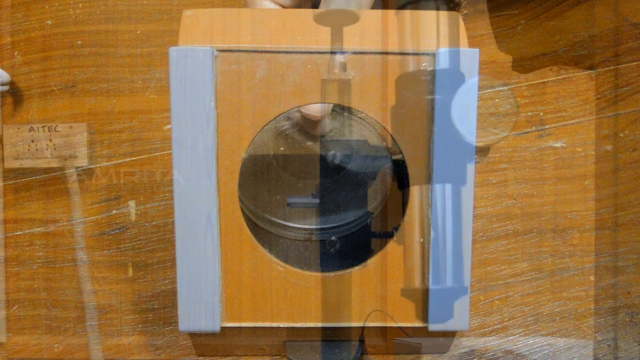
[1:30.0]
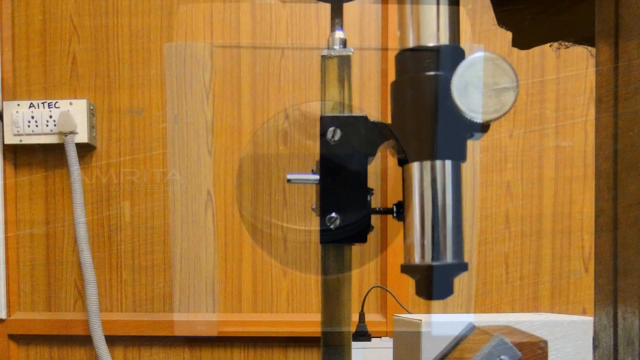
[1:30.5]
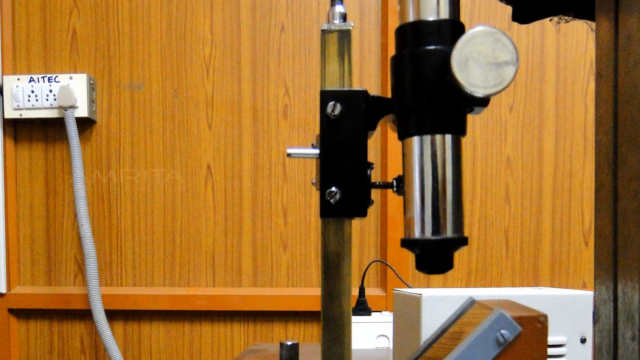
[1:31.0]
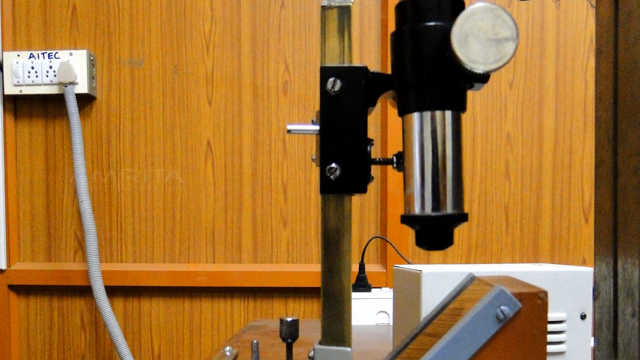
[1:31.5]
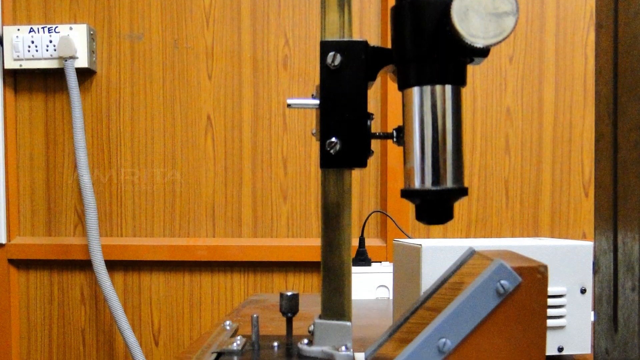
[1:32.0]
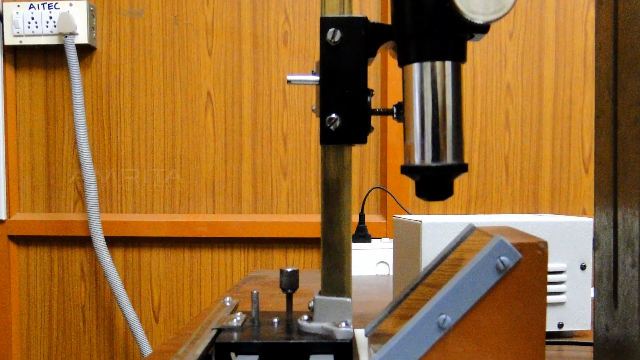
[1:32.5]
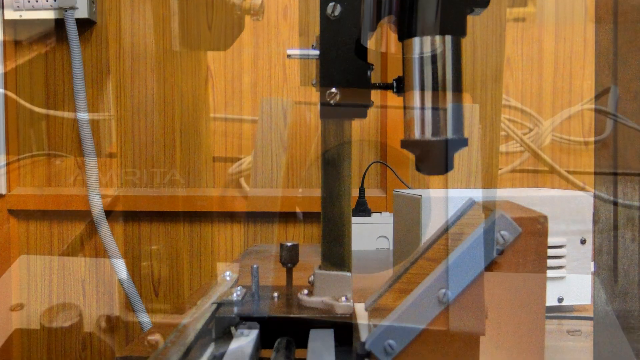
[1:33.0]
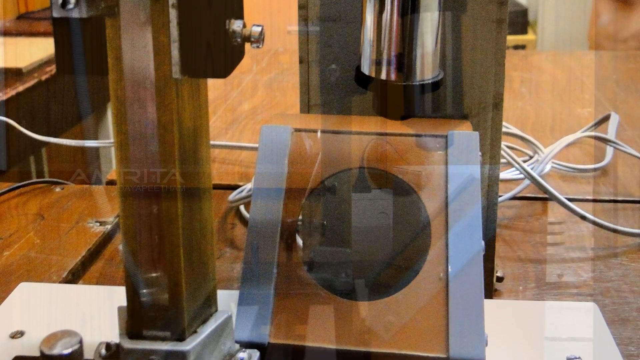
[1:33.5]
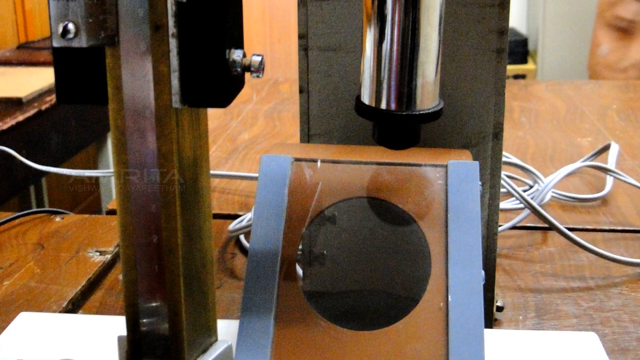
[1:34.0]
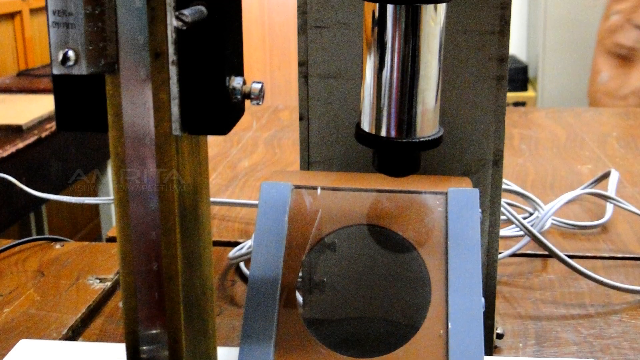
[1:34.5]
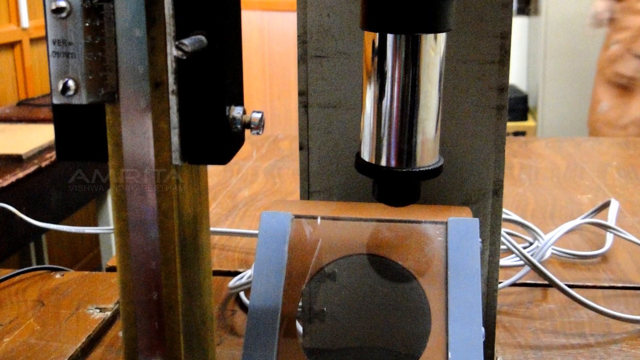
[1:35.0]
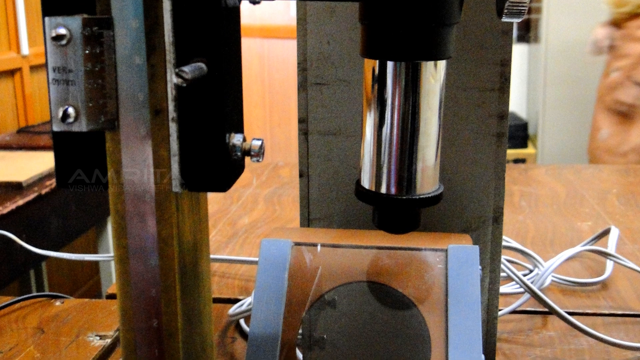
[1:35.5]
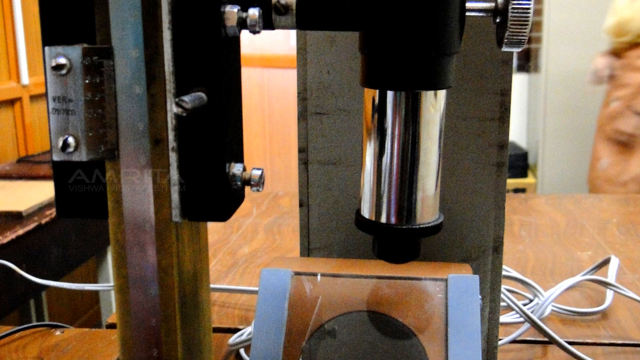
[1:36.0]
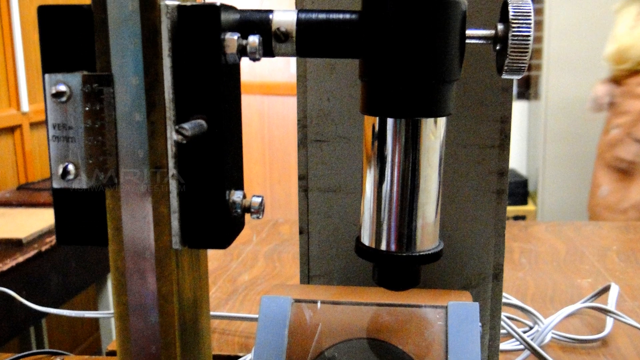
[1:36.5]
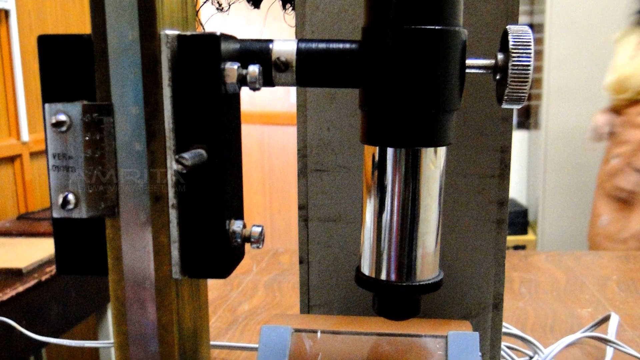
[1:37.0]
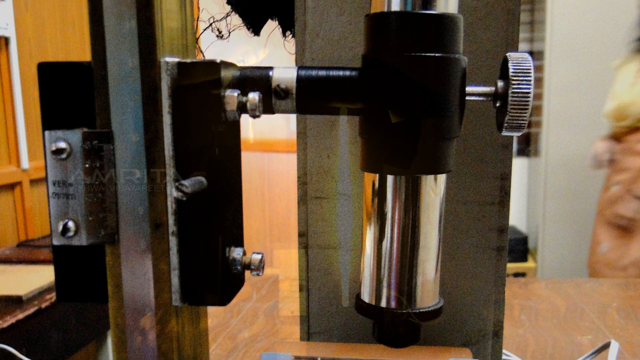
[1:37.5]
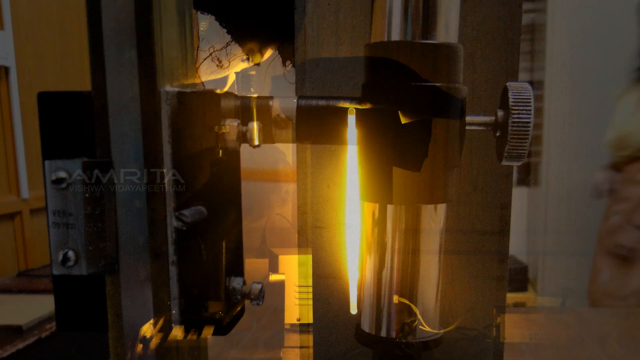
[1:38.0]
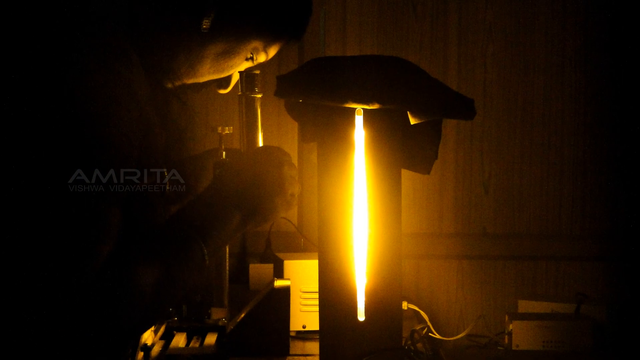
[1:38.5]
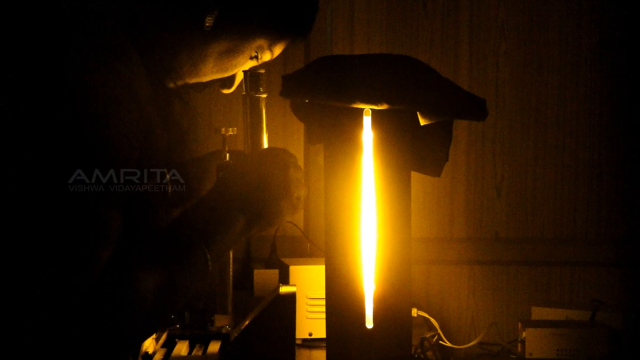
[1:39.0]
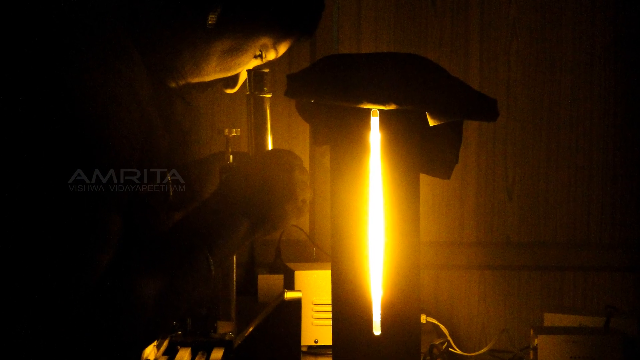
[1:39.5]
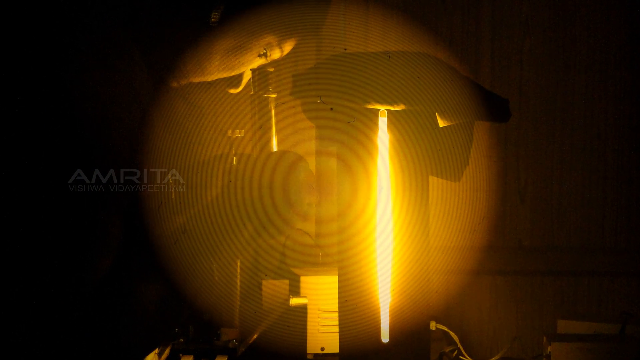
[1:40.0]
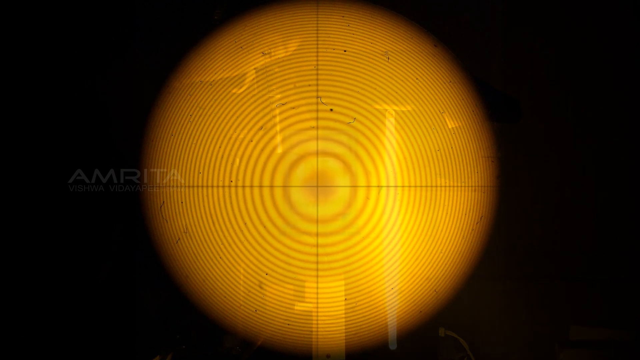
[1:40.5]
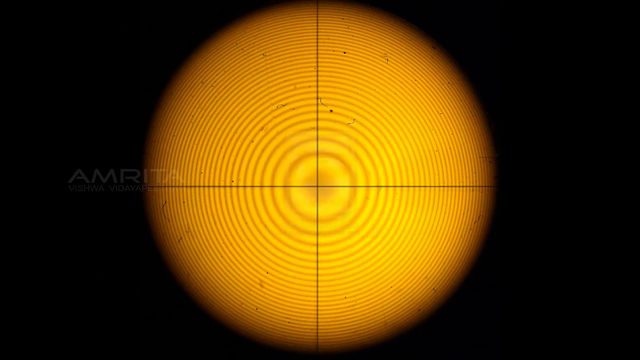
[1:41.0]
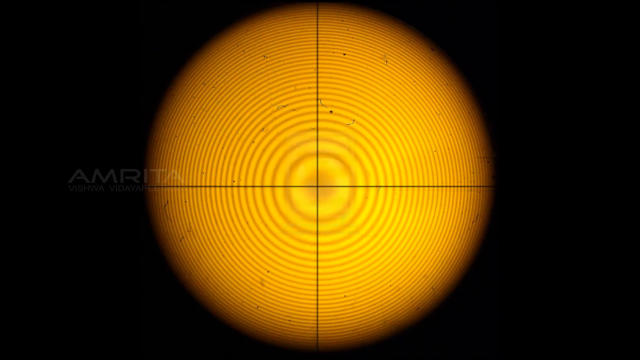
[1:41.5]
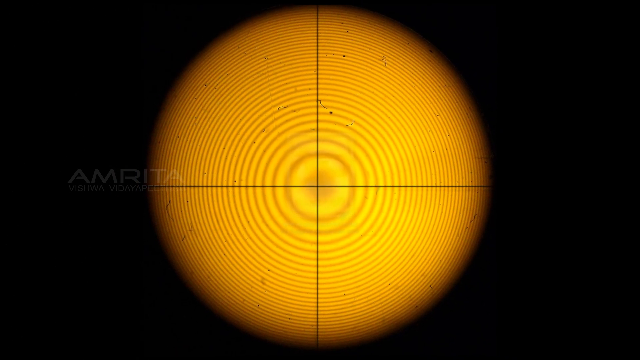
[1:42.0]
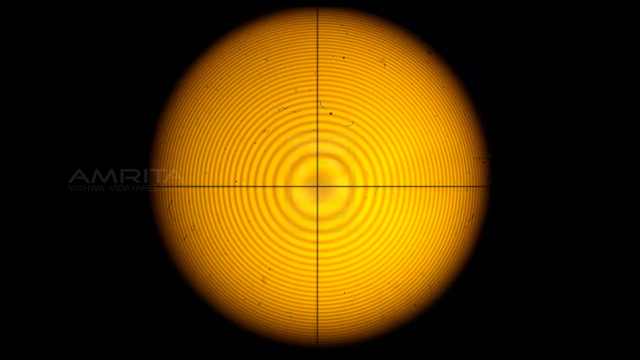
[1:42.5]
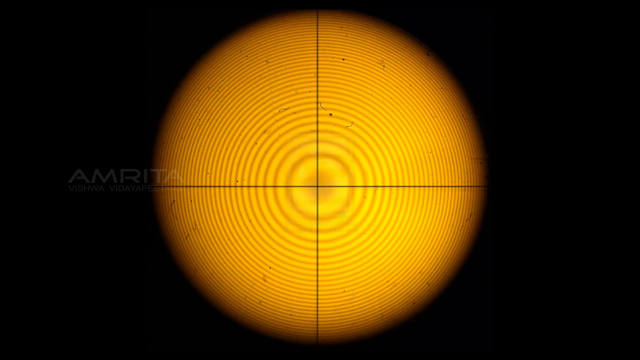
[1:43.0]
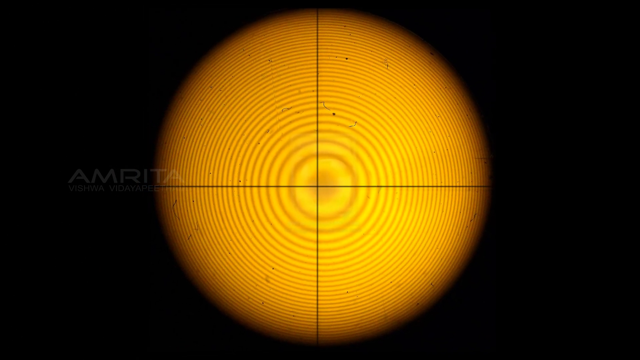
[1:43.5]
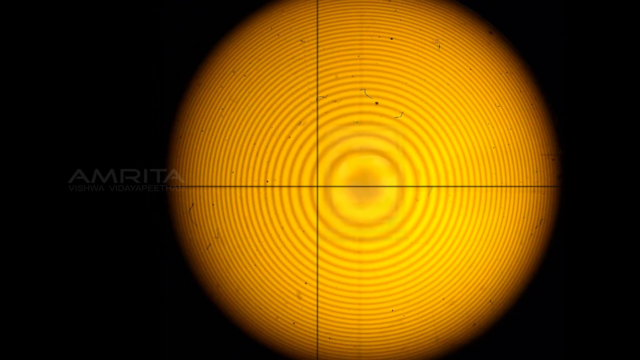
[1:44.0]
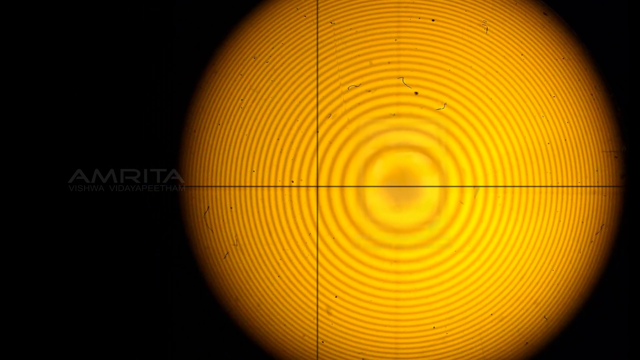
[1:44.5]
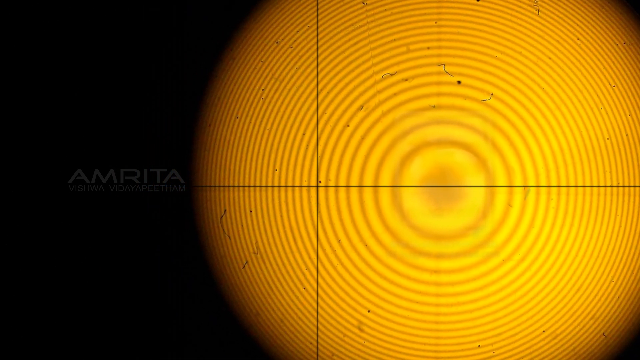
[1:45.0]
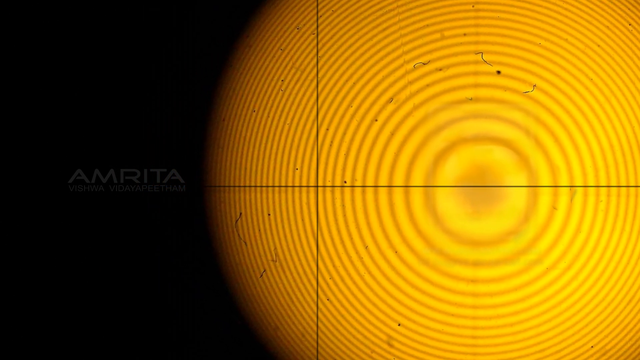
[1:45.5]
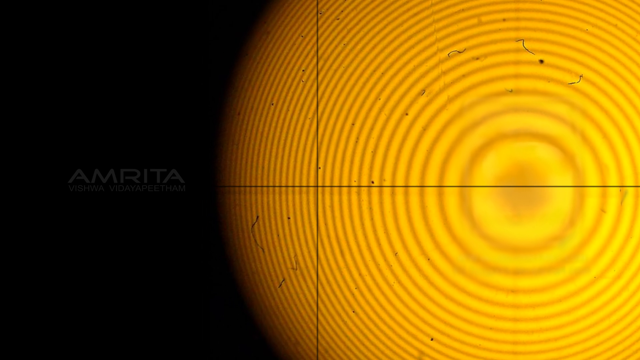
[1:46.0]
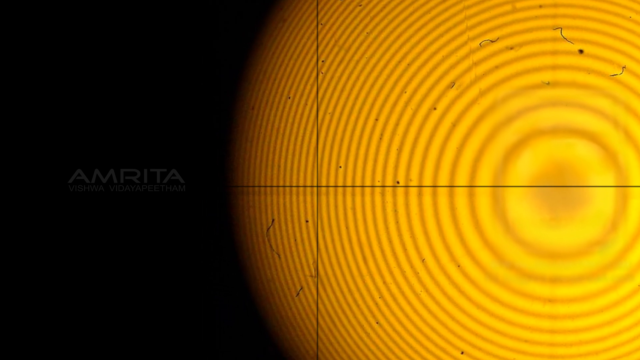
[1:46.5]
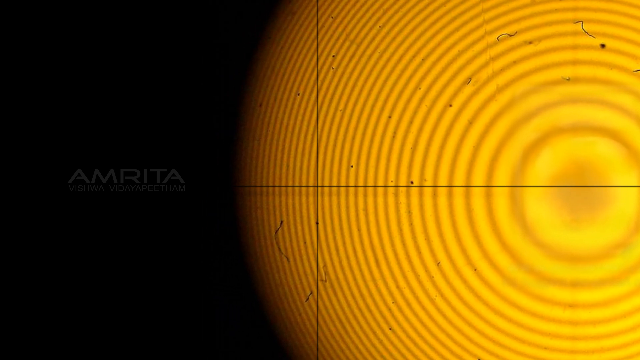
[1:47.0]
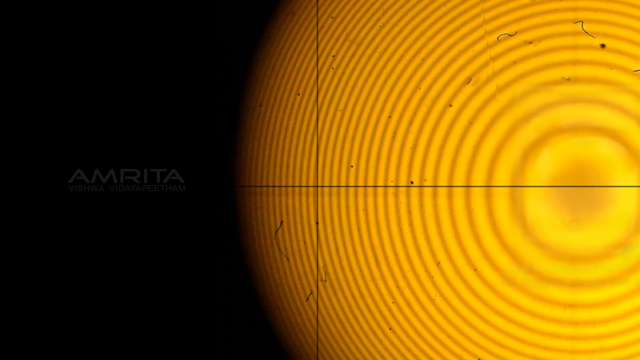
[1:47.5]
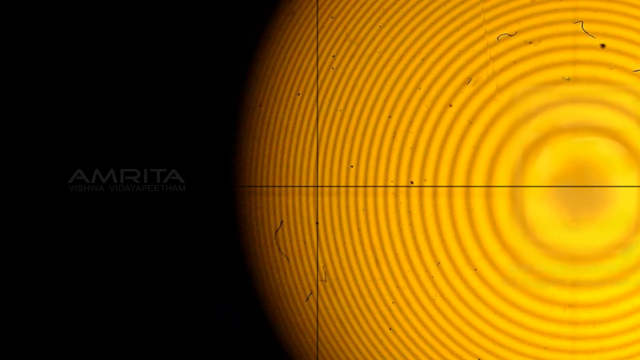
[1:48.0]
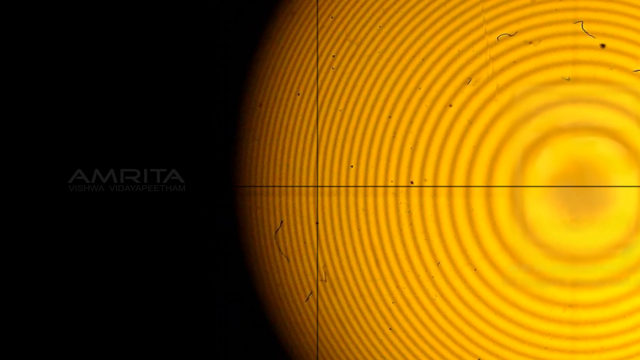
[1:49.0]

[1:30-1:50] The camera starts at the top of a microscope and pans down to its base; the microscope is in a room with wood paneling on the wall. The frame then switches to a different still photograph of a microscope, also on a piece of wood, and this time the view starts at the base and moves up, showing its different components. Another still image follows: a microscope, barely visible on the left, in a really dark room with a large thick curtain. Through a slit in the curtain a lot of orange and yellow light peeks in, casting some light onto the microscope. This transitions to a black backdrop with a yellow circle containing many tiny yellow circles.